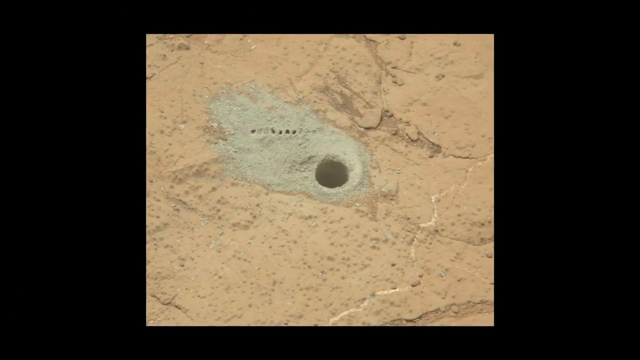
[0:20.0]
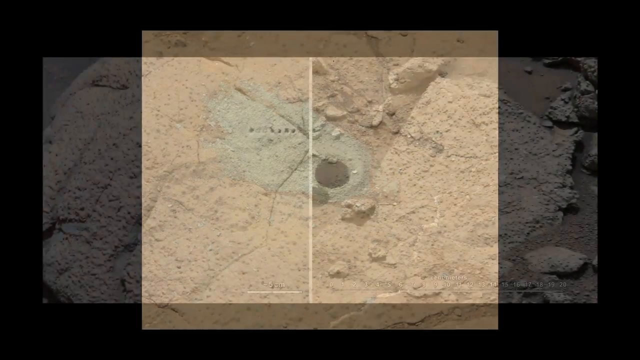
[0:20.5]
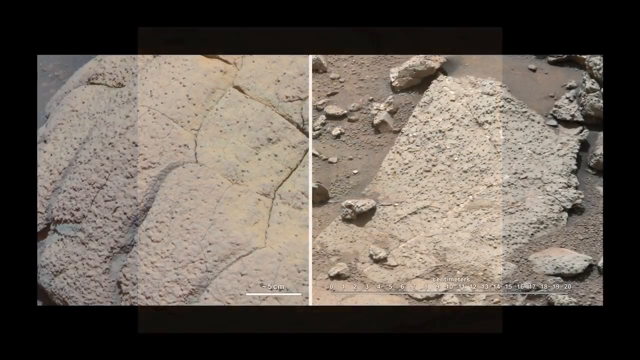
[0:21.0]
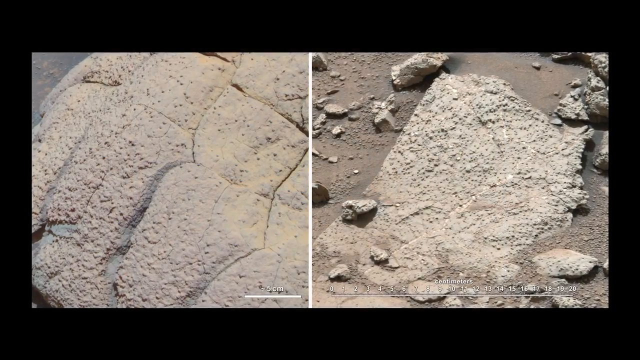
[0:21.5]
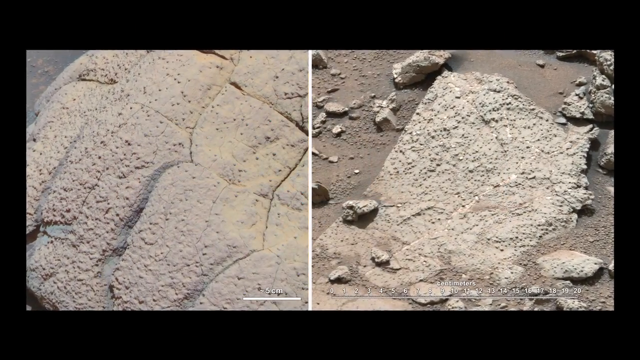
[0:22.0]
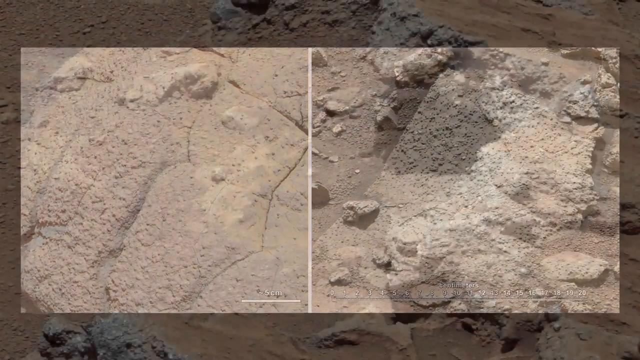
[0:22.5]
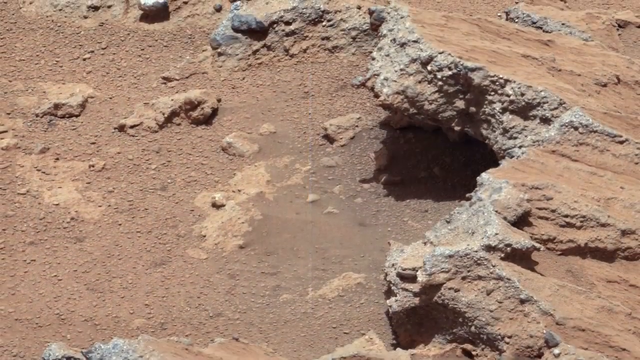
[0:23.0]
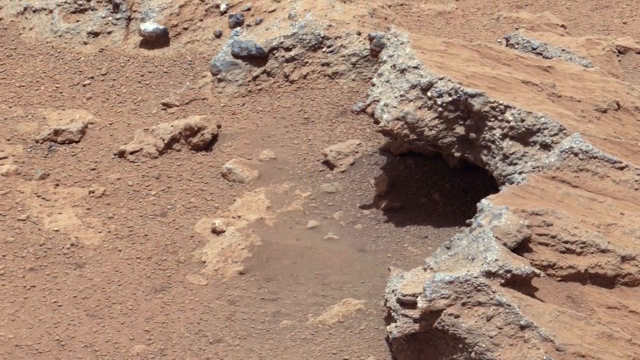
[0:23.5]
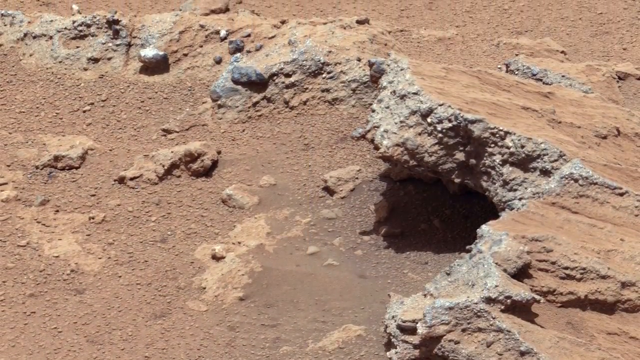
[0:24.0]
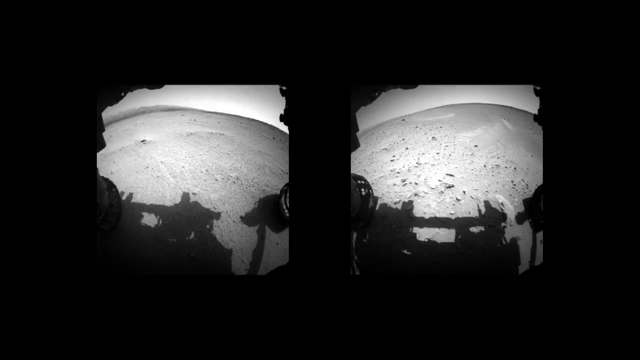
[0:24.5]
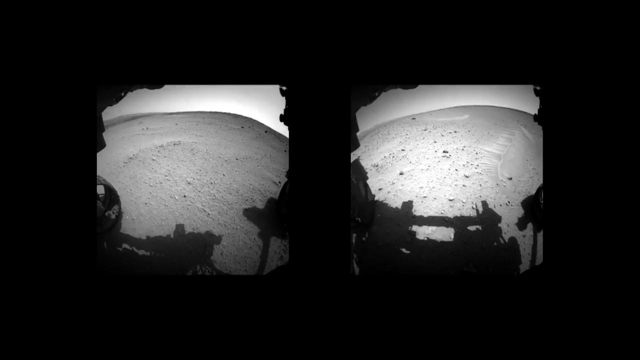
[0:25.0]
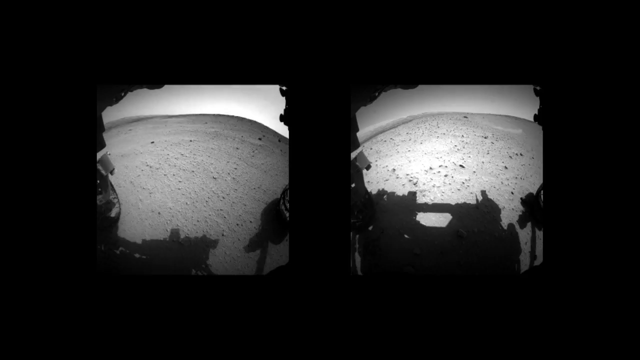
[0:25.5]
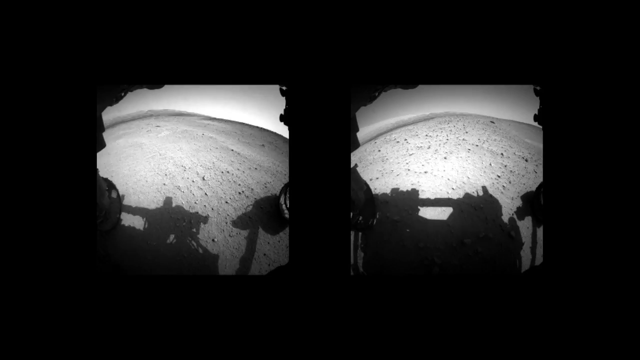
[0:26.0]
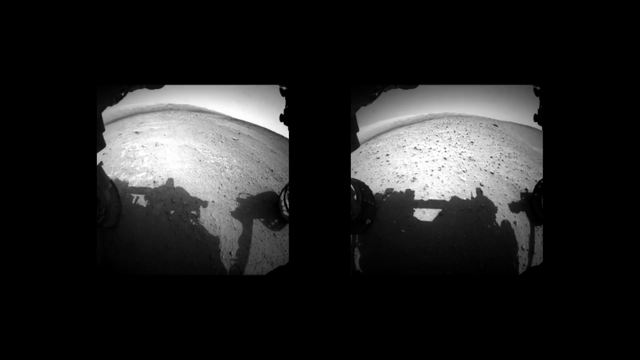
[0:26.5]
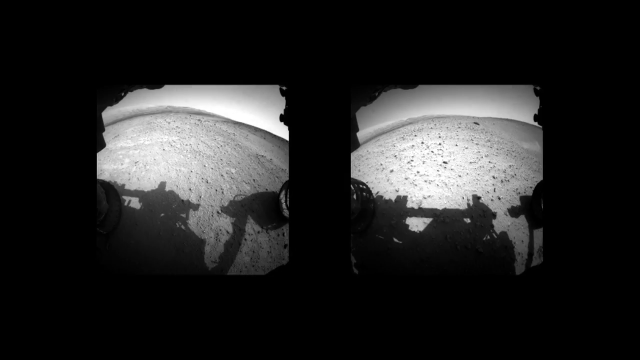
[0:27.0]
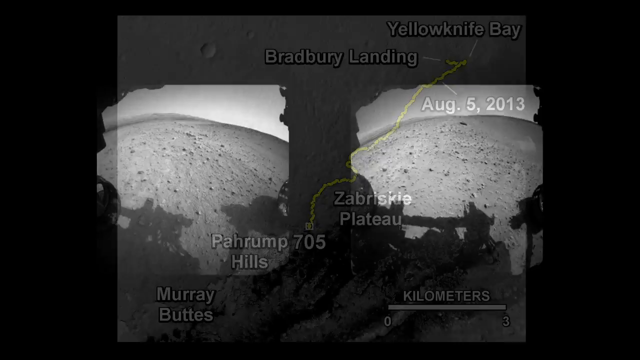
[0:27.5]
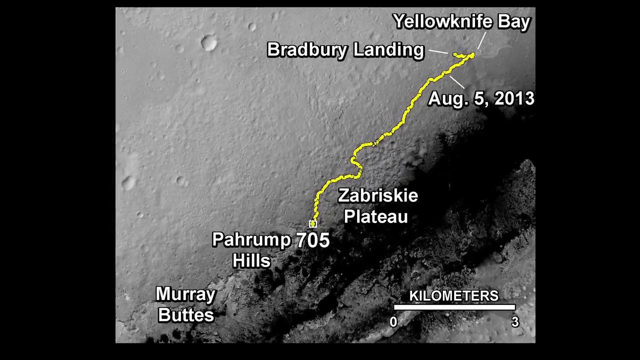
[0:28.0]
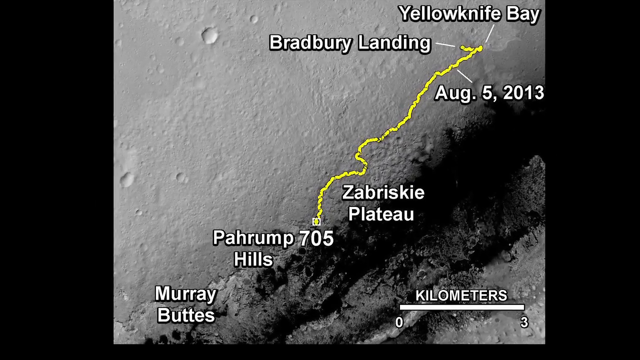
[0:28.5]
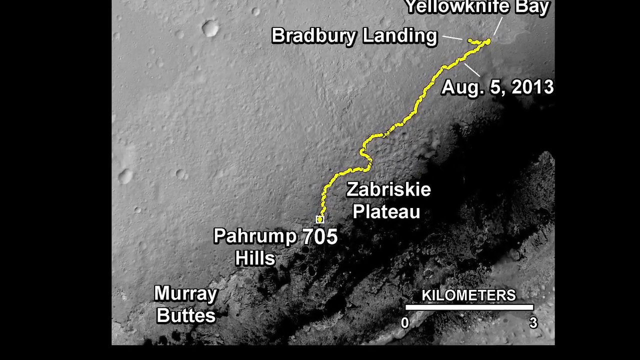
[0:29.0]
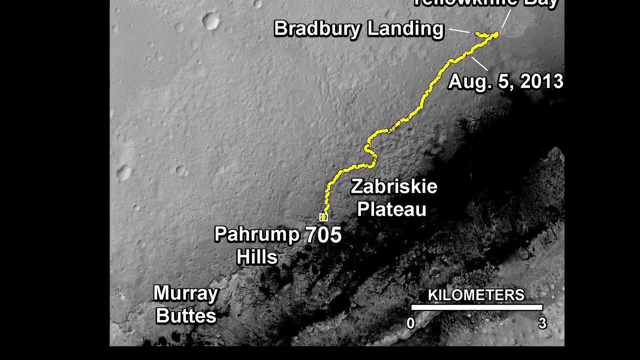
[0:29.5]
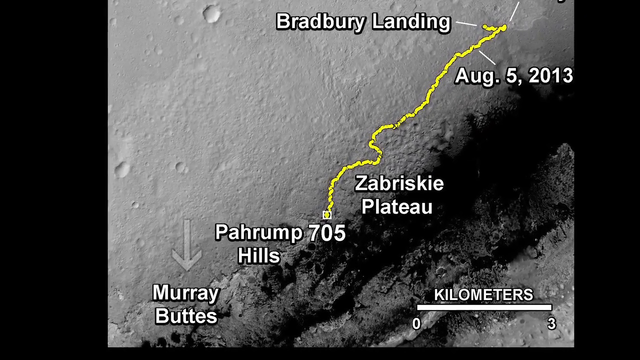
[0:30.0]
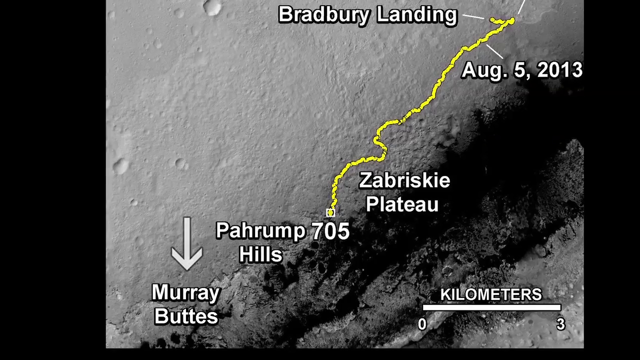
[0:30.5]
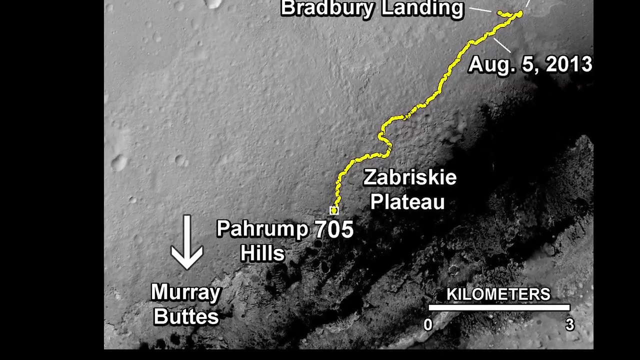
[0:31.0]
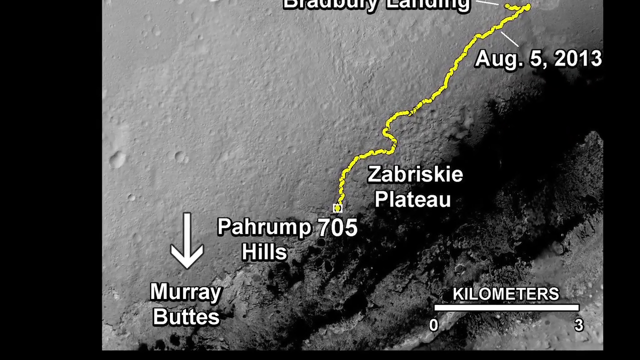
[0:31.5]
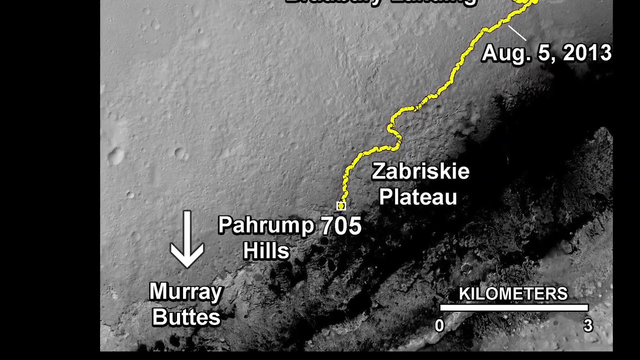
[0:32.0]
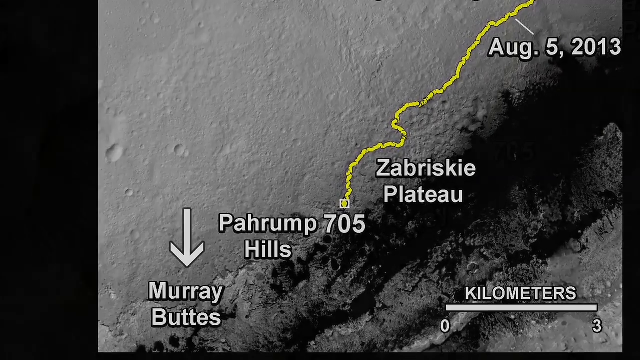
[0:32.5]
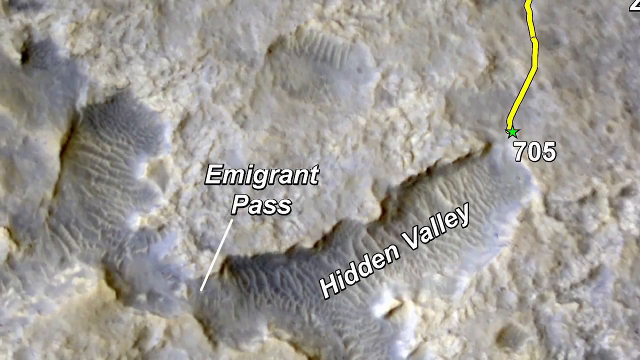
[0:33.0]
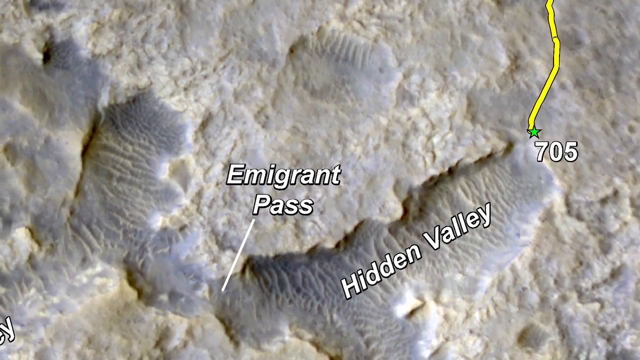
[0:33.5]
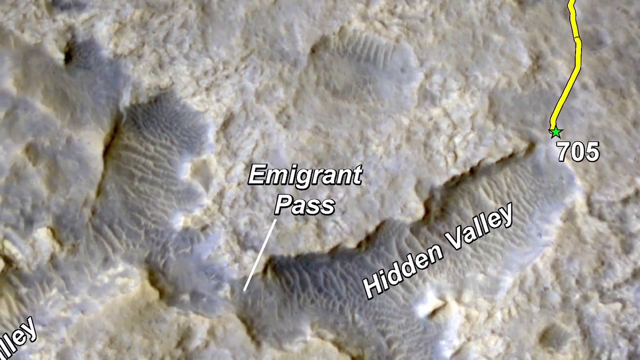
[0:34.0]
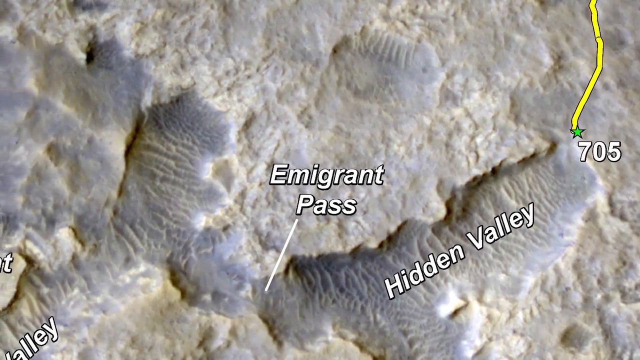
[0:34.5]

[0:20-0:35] A map gives an idea of where the rover is going to be. The video then cuts to what looks like black-and-white footage from a camera shooting from the rover's perspective. Land appears, with a cross-section of what the land would look like, followed by another shot from the rover's perspective. Next comes a map showing where the rover has been, with markings giving the dates the rover visited those areas and a bar showing in kilometers the distance the rover has covered. A cross-section of the terrain the rover has to cover follows; it looks very rugged rather than flat. Names then appear on the map for the different places the rover will visit.